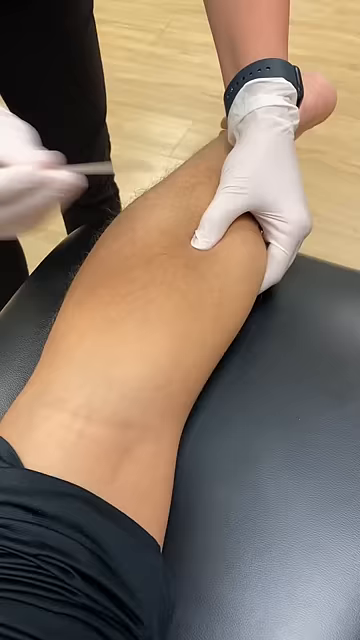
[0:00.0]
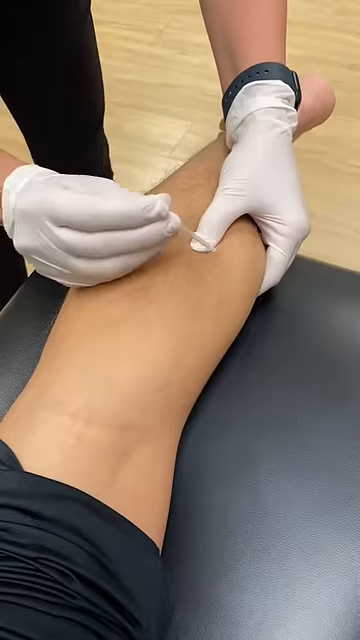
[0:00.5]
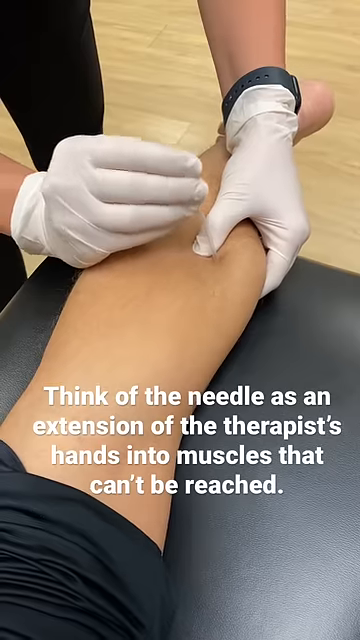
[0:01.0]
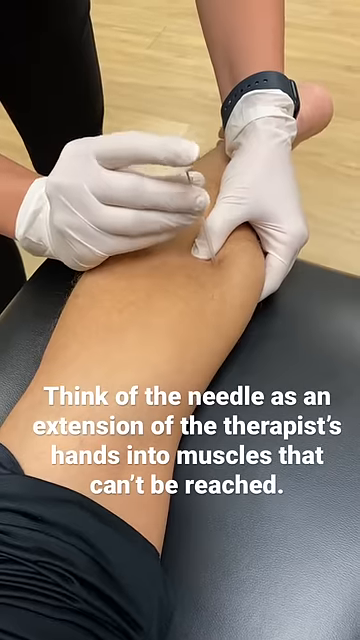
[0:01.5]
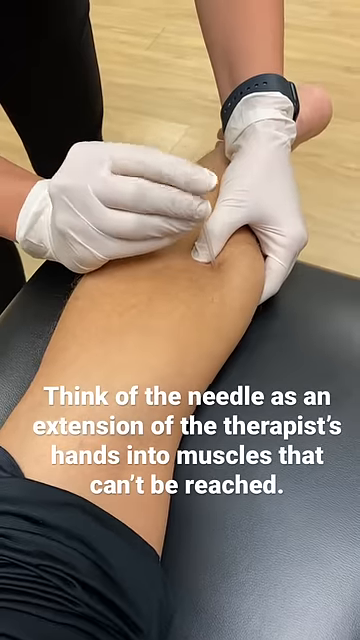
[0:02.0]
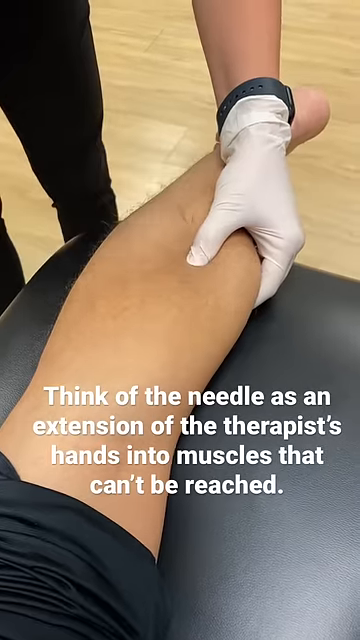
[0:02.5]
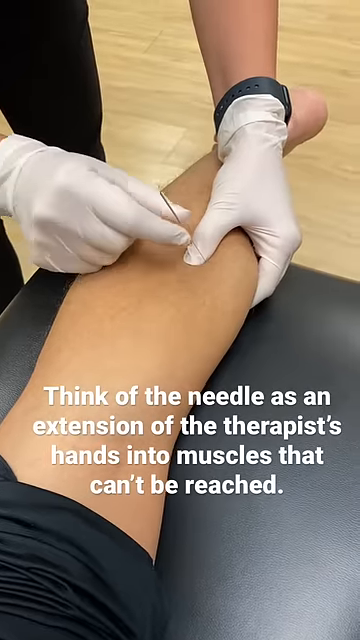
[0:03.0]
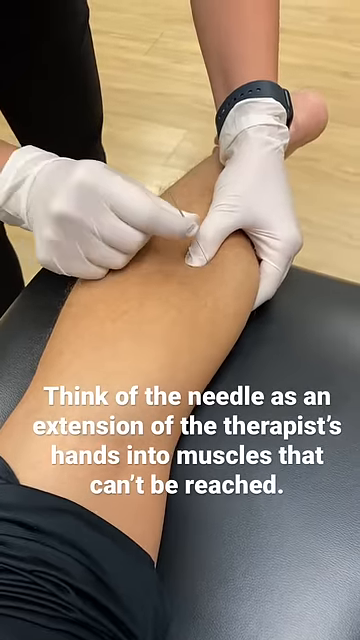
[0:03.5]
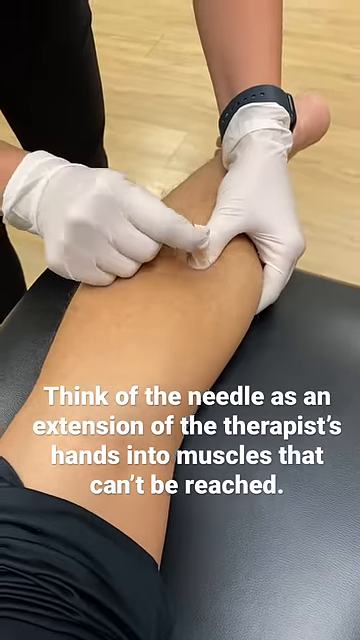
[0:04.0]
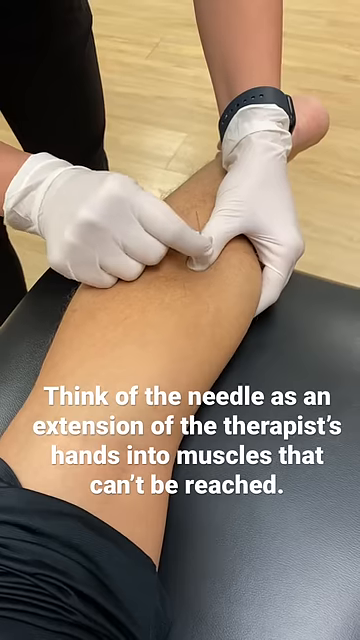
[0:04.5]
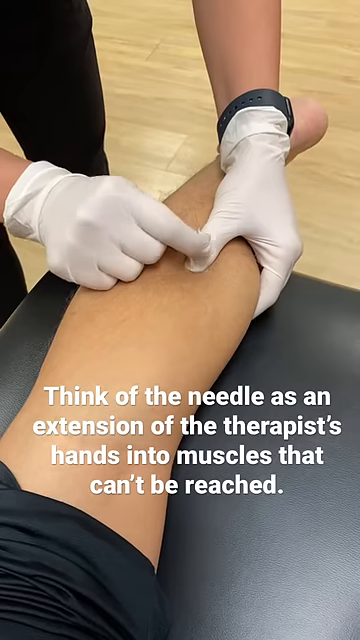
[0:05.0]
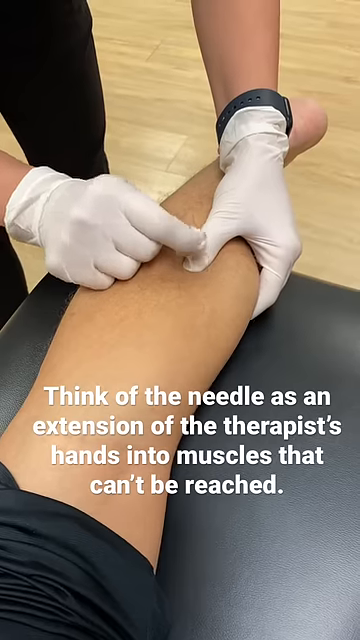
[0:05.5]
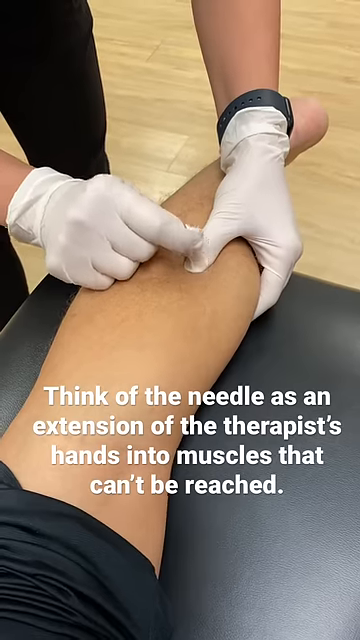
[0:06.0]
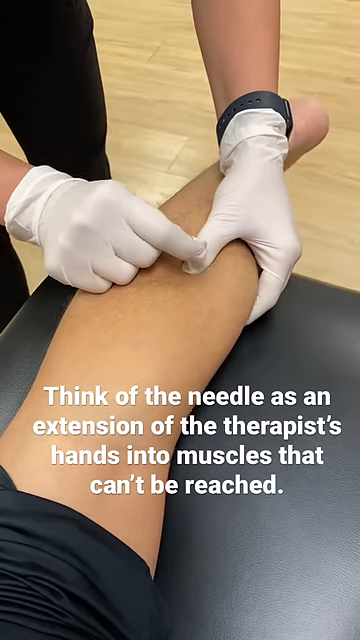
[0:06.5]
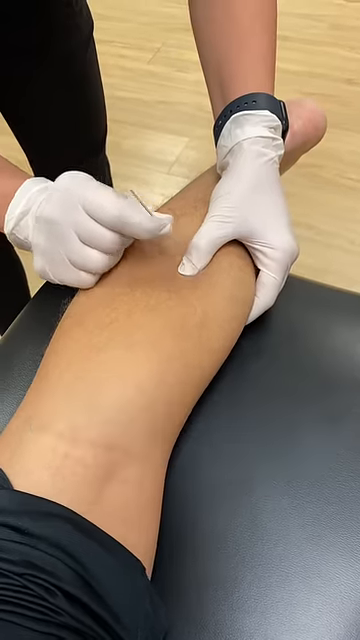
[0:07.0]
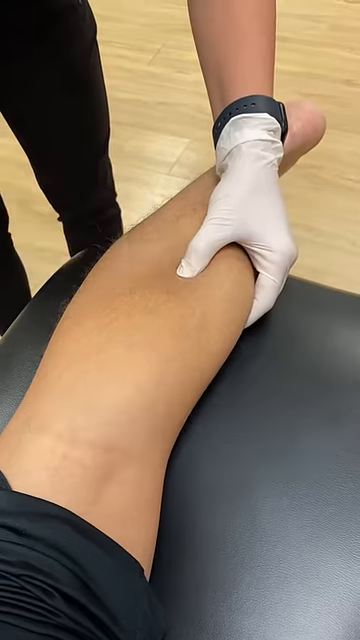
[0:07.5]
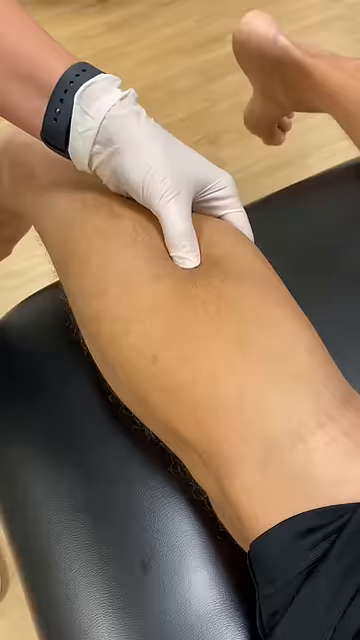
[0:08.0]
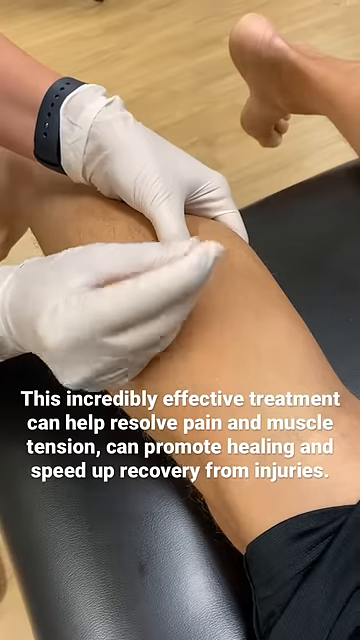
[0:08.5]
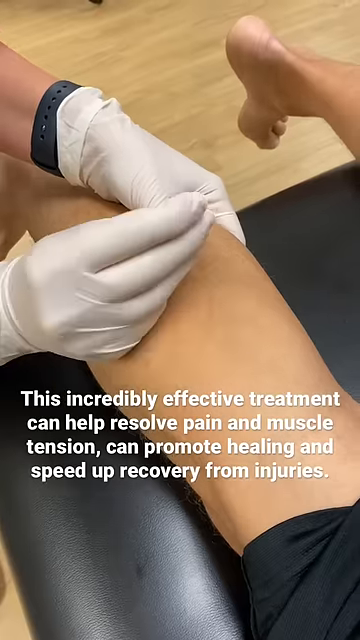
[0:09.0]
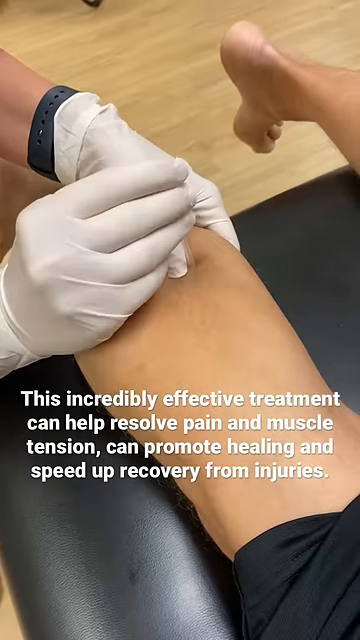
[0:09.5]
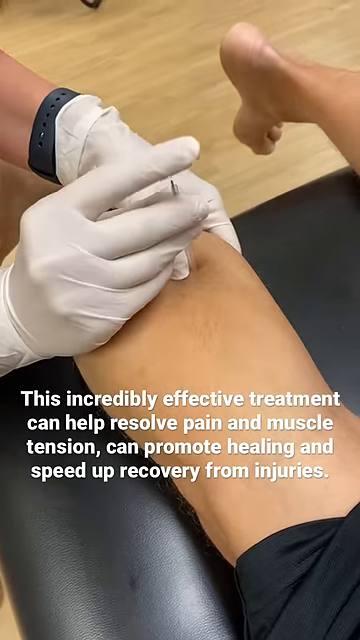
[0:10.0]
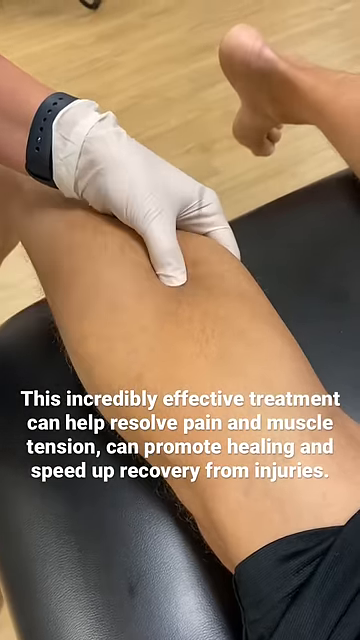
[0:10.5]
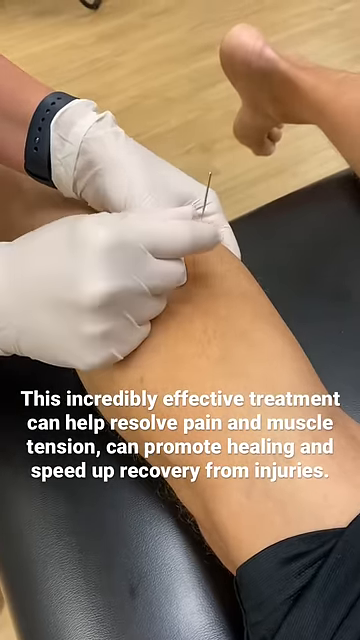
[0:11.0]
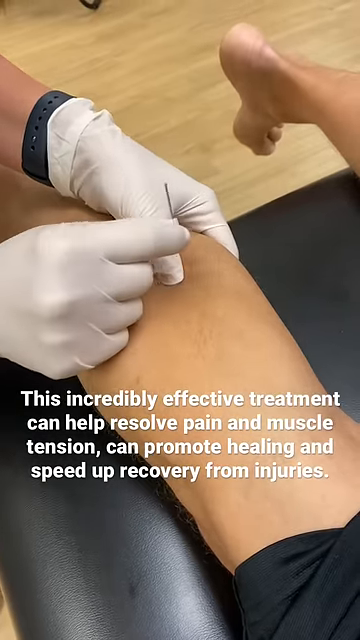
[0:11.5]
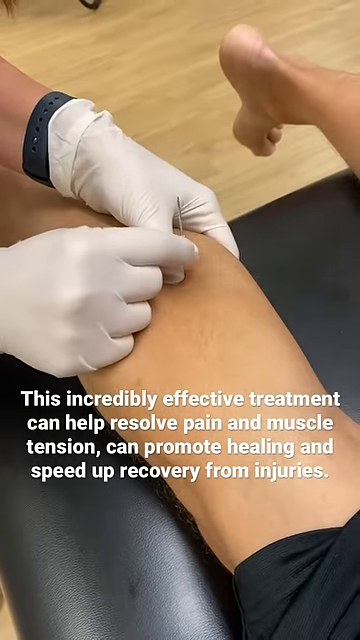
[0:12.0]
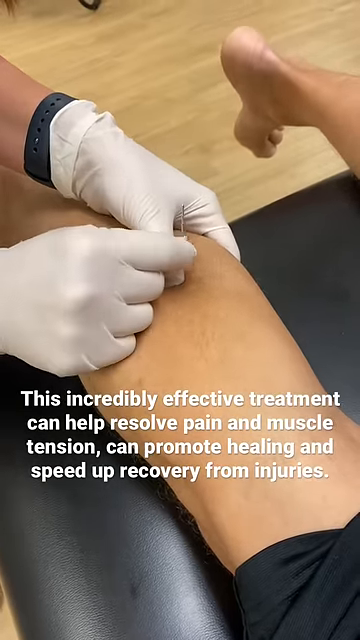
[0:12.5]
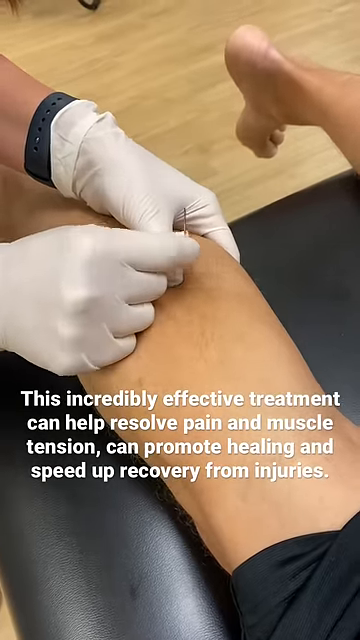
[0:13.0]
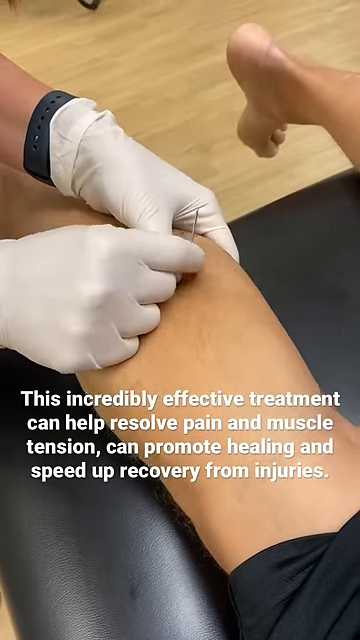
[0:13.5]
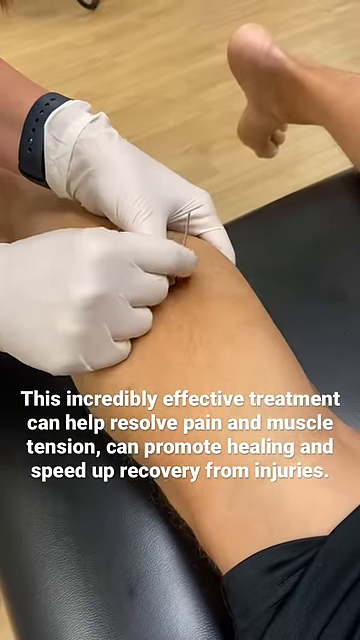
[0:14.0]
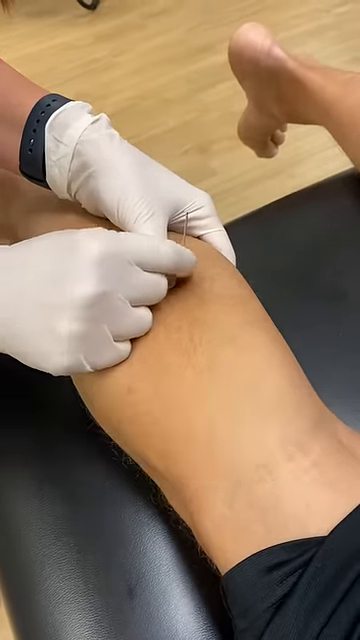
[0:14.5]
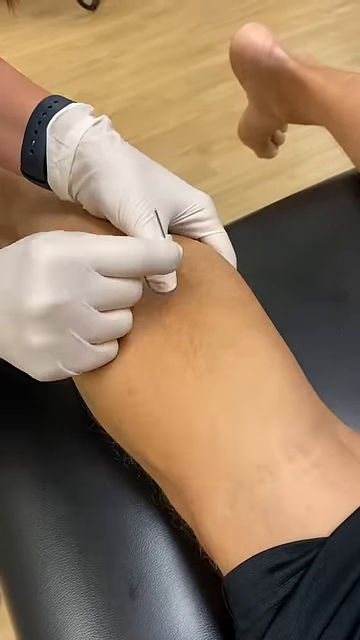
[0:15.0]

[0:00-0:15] Dry needling for tight calves is shown, in what looks like some kind of acupuncture treatment: somebody jams a needle into the back of another person's calf. There are some words on the screen, but they are too small to read. A person wearing medical gloves jams needles into the back of the leg, and at one point the calf twitches. The video is possibly from a running video channel. There is just one setting, what seems to be a PT room, where a person, apparently a man, lies on a padded table while a doctor jams things into his calf; it is unclear whether the person doing the needling is a man or a woman. The people appear to be white, and there seems to be a wood floor in the background. Only people appear in the video.